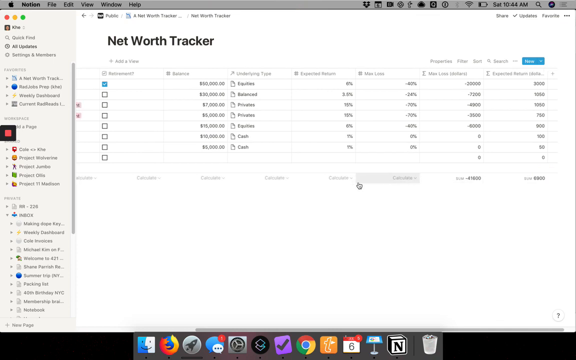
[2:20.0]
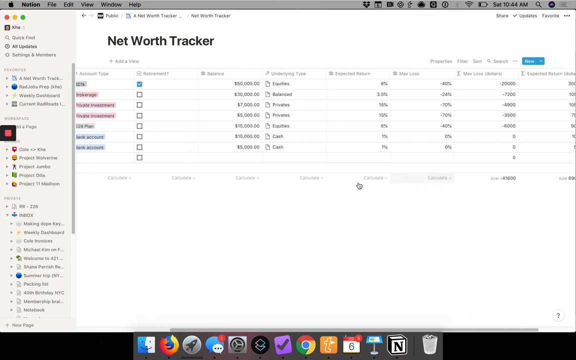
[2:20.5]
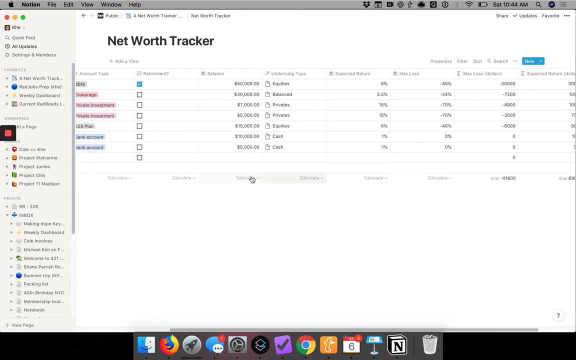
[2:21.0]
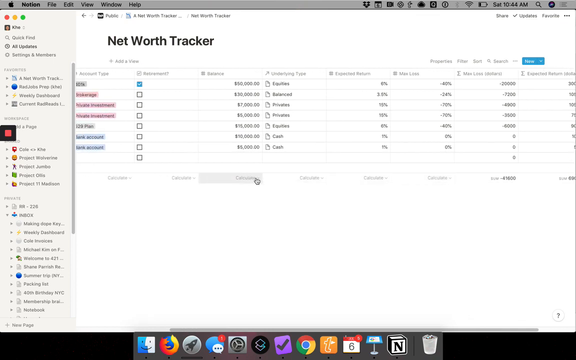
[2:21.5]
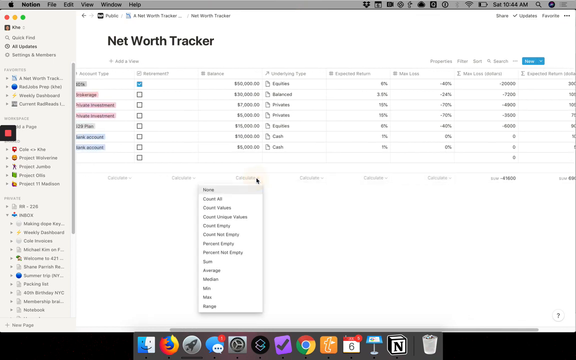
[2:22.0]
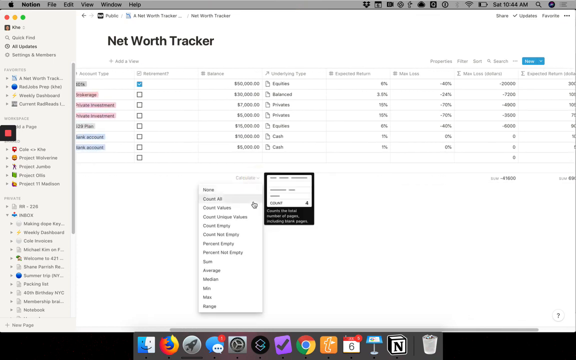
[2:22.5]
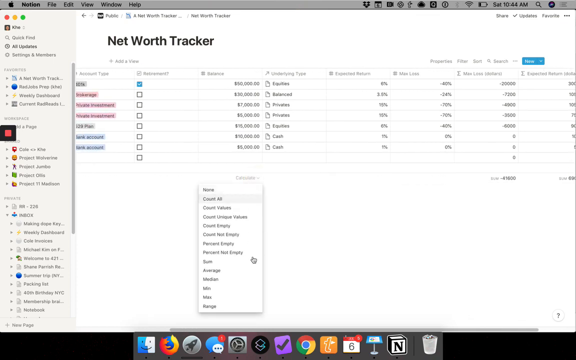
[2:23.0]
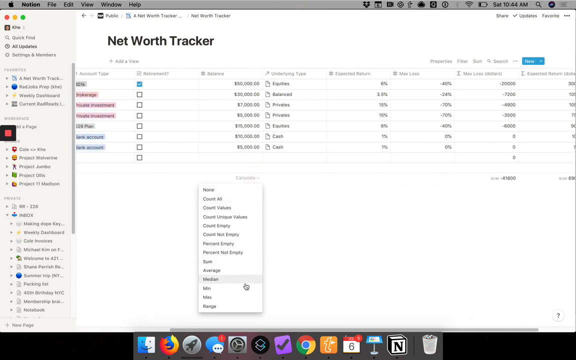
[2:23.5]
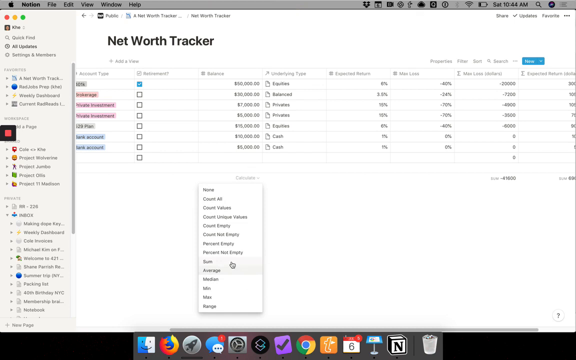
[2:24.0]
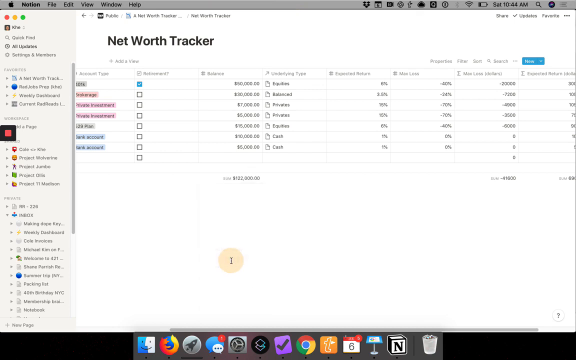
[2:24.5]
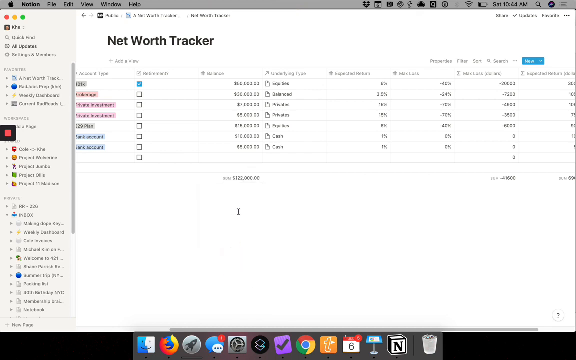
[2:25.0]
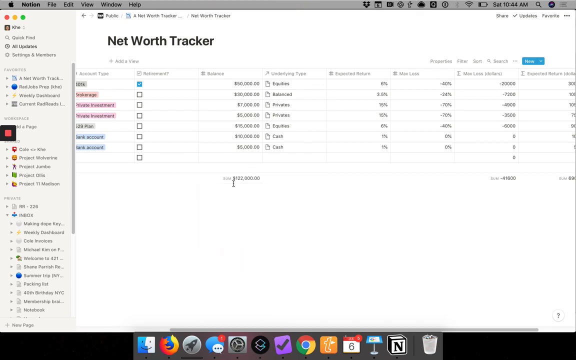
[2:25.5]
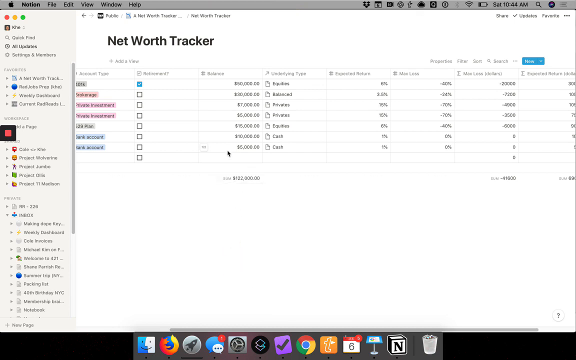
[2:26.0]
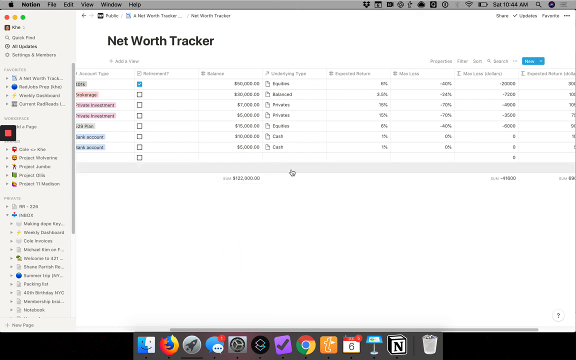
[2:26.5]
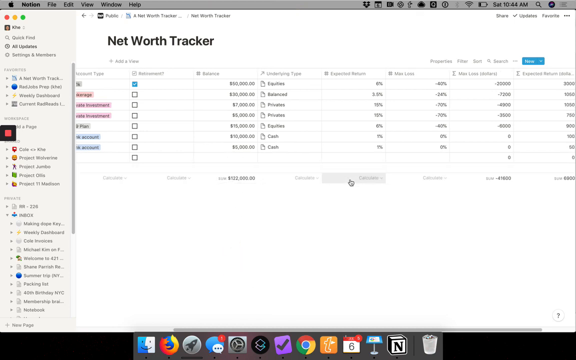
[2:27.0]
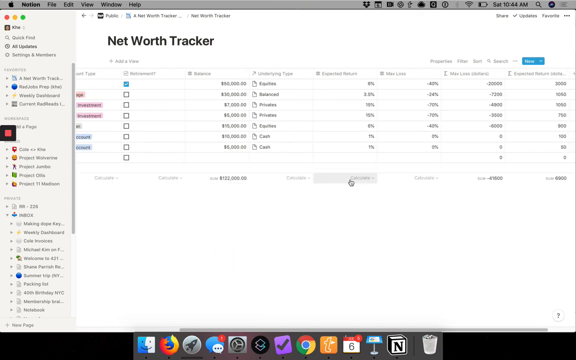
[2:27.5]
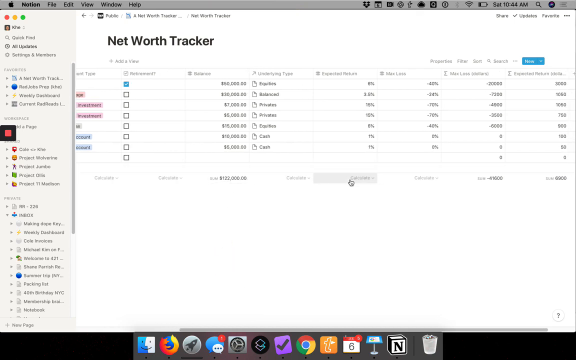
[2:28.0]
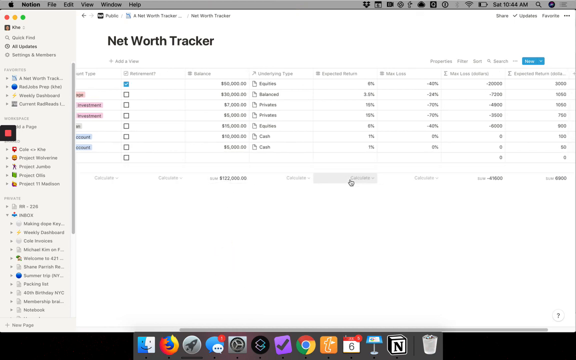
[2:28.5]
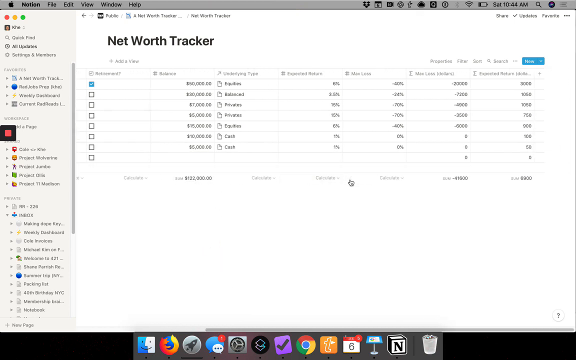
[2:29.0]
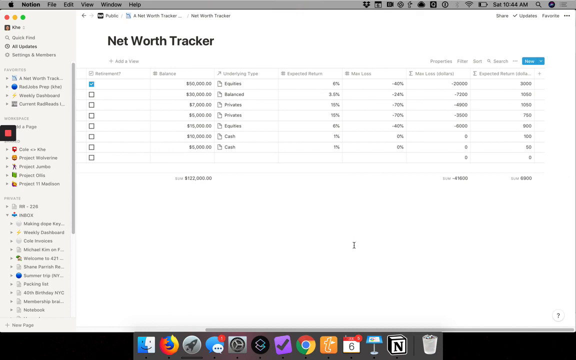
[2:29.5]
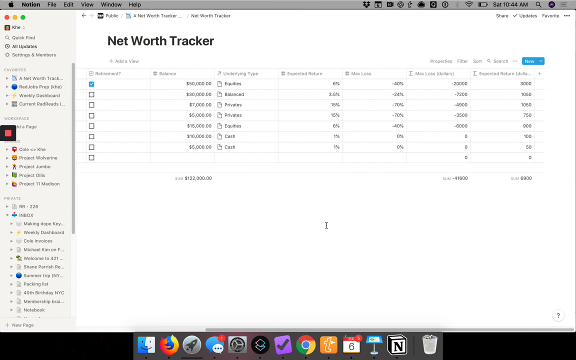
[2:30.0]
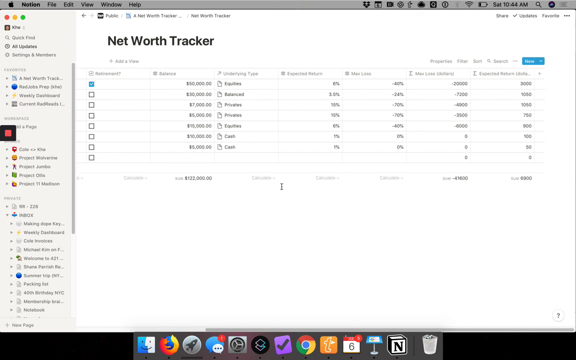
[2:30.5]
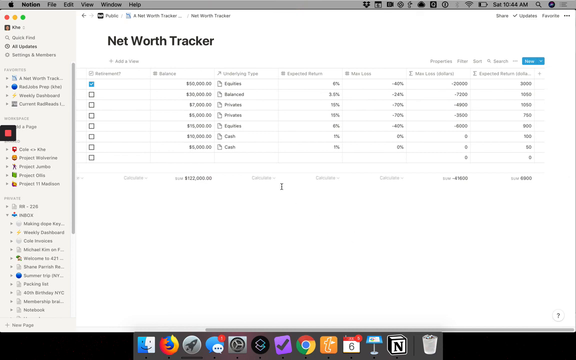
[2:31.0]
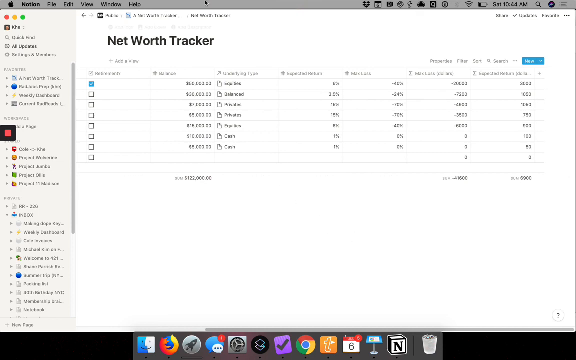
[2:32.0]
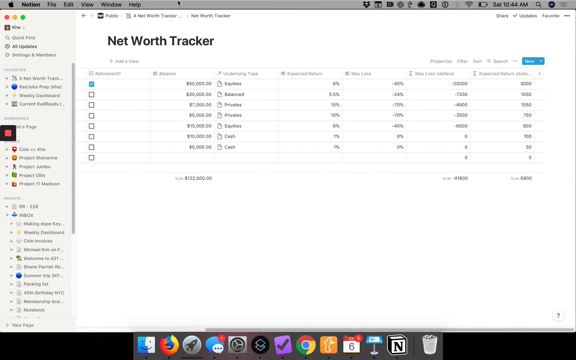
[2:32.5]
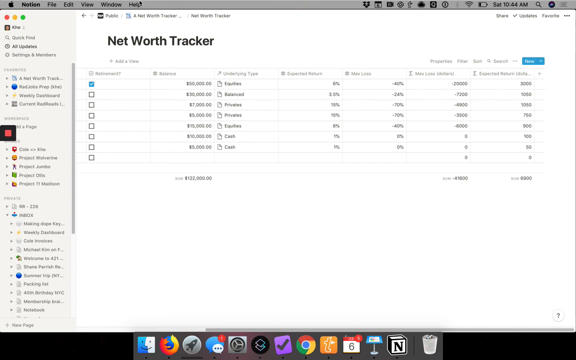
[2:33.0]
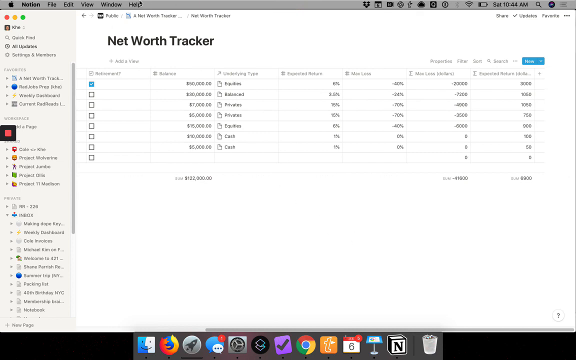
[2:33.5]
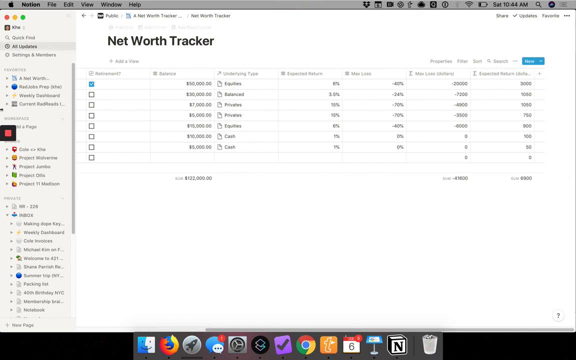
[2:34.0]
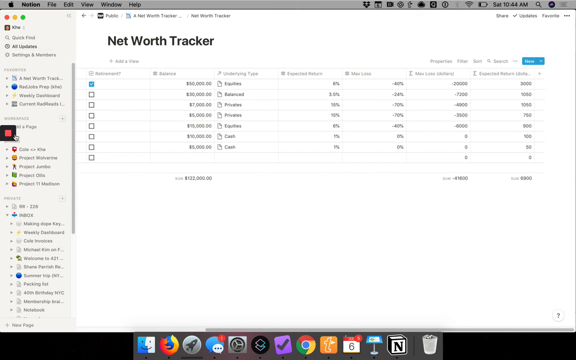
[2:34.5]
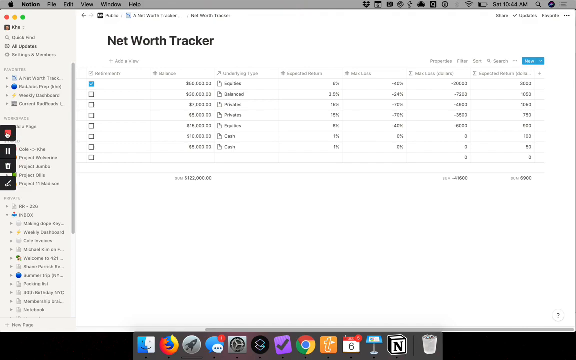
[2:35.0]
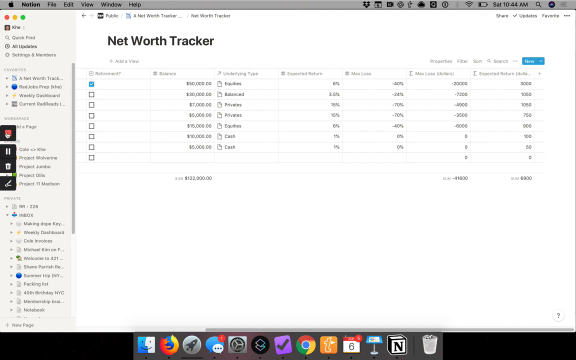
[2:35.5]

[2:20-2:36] An Apple computer screen shows an Apple logo on the upper left and the date and time on the right. The open program has a white backdrop with "Net Worth Tracker" in black lettering and at least eight or nine columns. There are checkmark boxes, one of them checked with a blue checkmark; the rest of the columns have words and numbers. The mouse scrolls to the left with a pointer shaped like a white hand. It points at a word, creating a drop-down menu, then points at another word and the menu goes away. The user then scrolls in the other direction, and the pointer turns from a hand into an eye symbol. There is a lot of pointing and clicking, with many little drop-down boxes appearing and disappearing as the mouse points and clicks on the page.